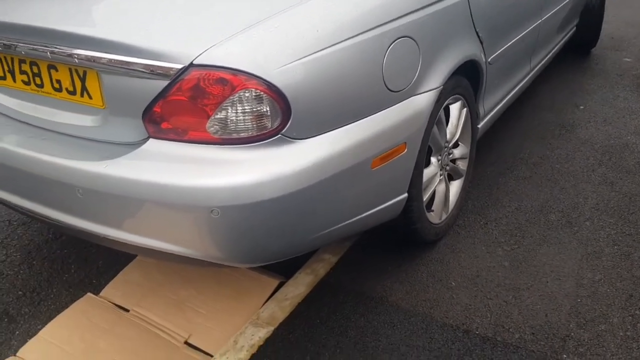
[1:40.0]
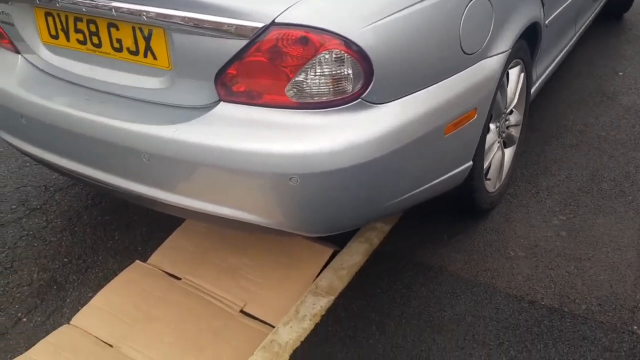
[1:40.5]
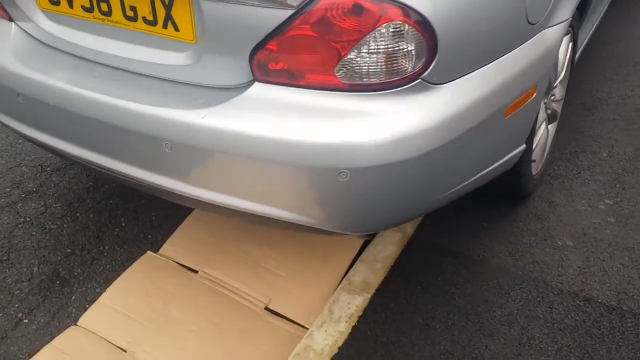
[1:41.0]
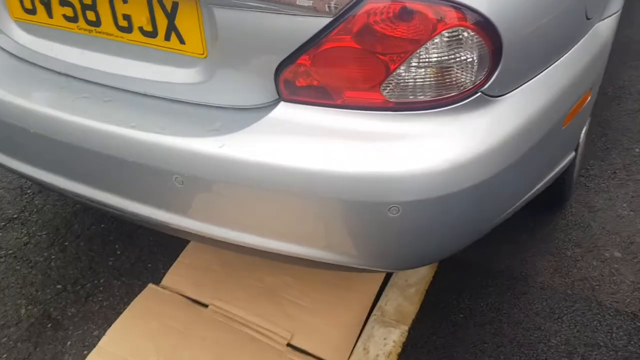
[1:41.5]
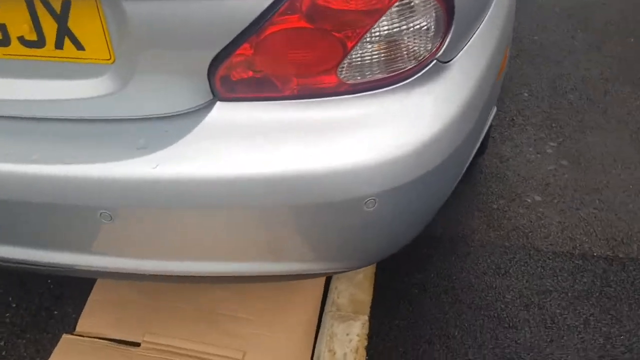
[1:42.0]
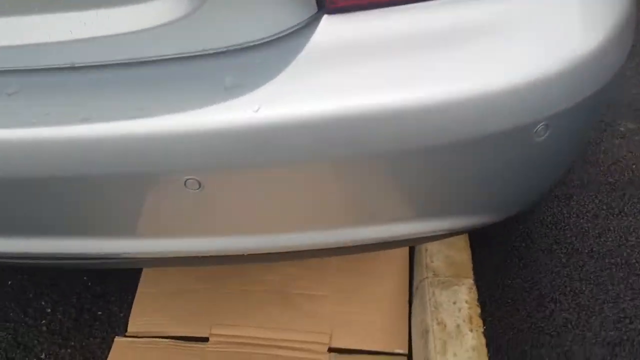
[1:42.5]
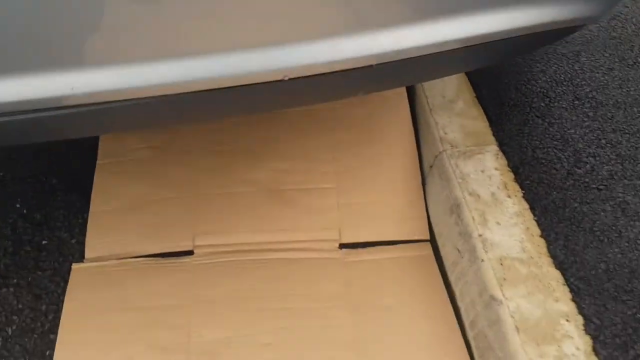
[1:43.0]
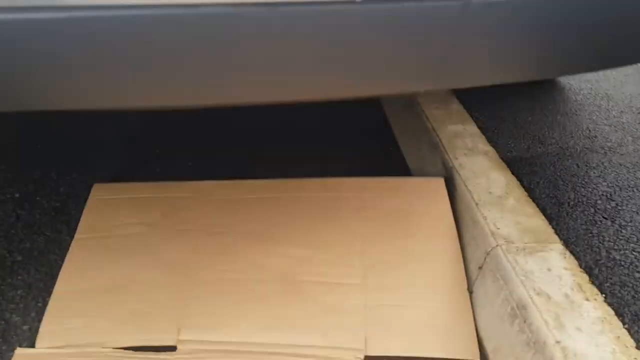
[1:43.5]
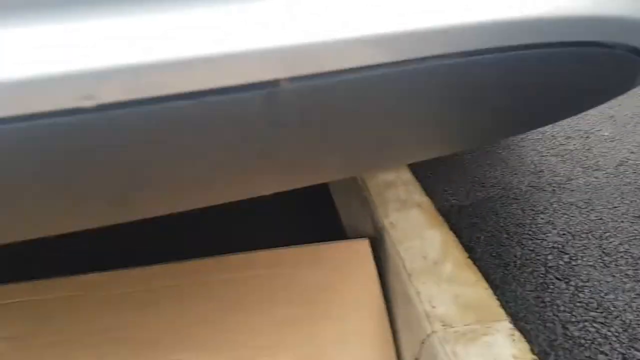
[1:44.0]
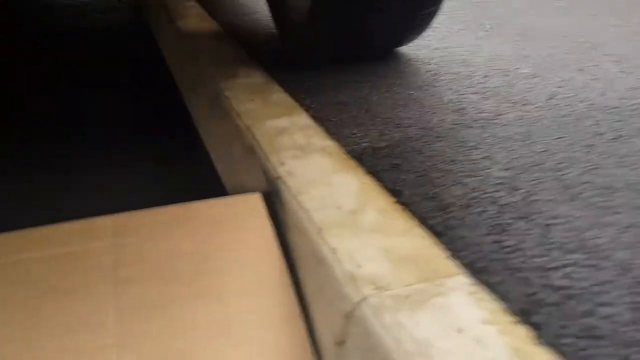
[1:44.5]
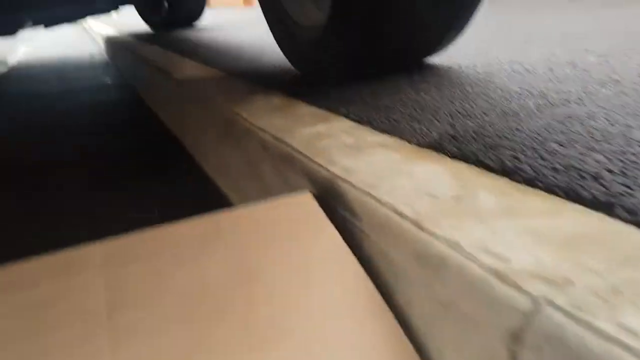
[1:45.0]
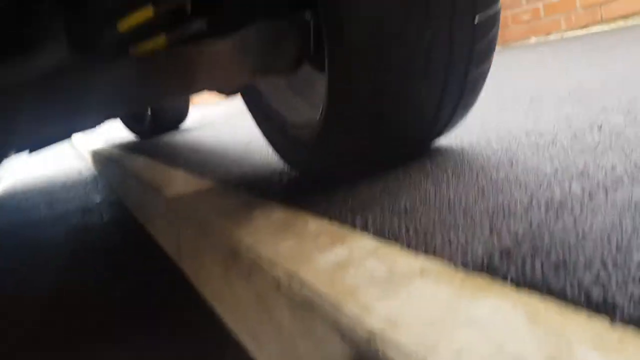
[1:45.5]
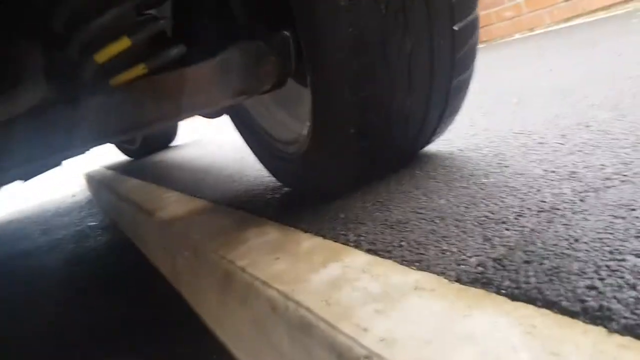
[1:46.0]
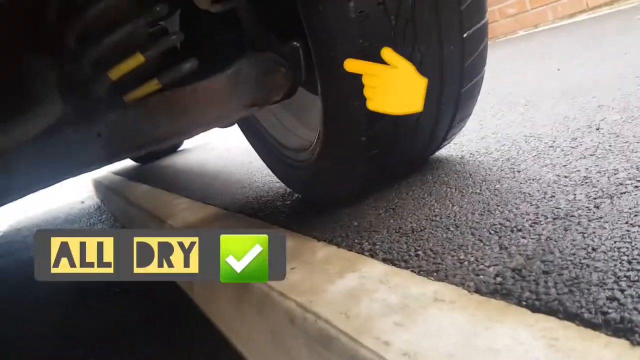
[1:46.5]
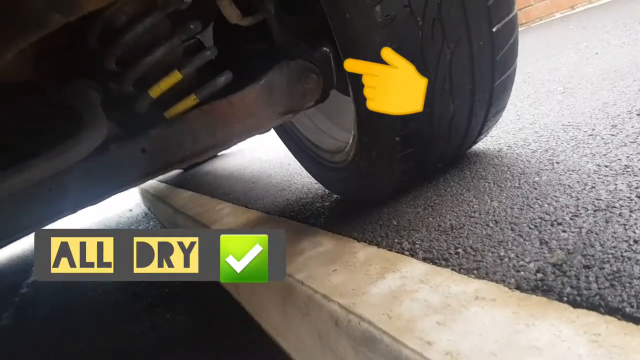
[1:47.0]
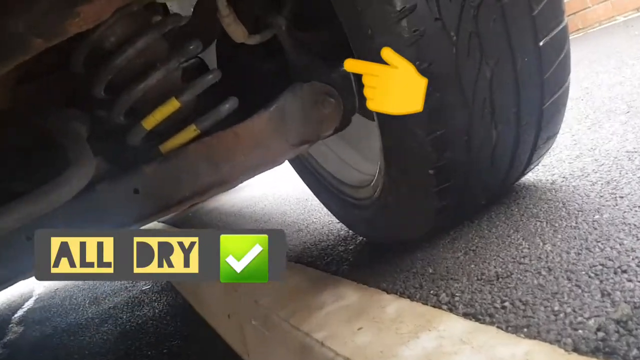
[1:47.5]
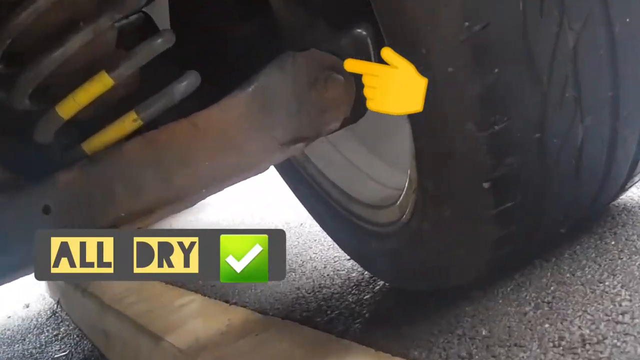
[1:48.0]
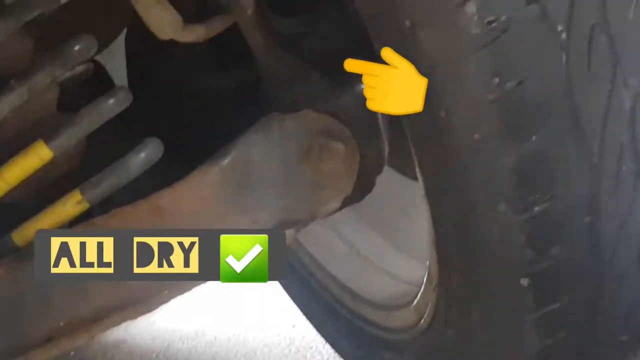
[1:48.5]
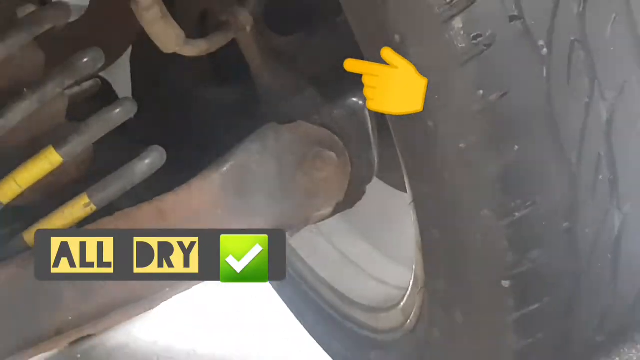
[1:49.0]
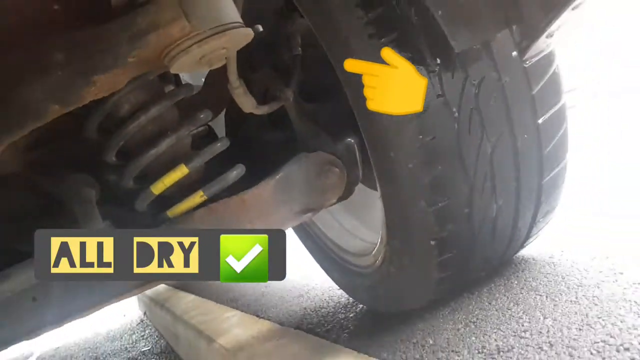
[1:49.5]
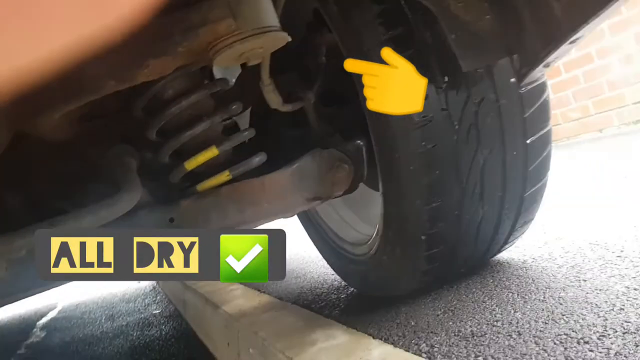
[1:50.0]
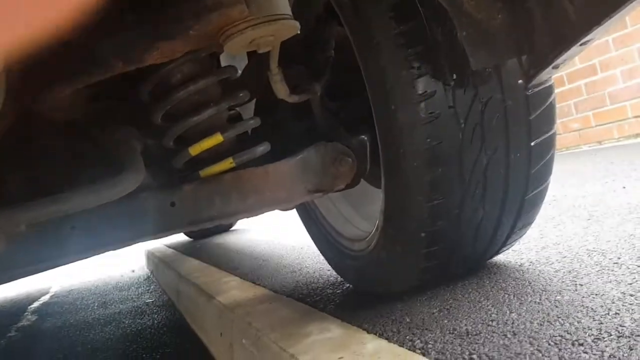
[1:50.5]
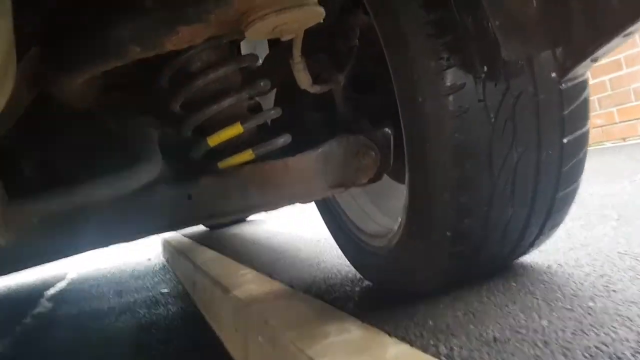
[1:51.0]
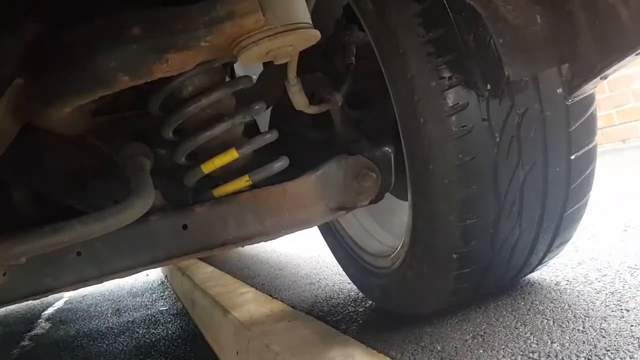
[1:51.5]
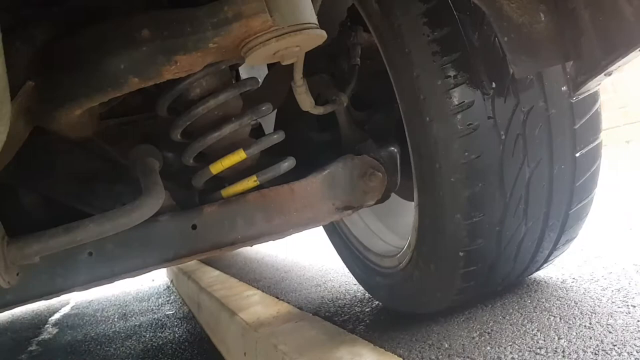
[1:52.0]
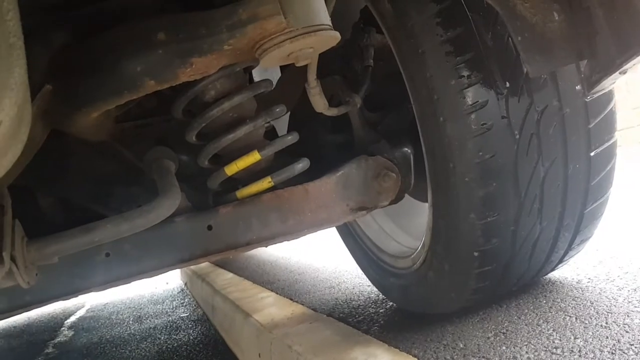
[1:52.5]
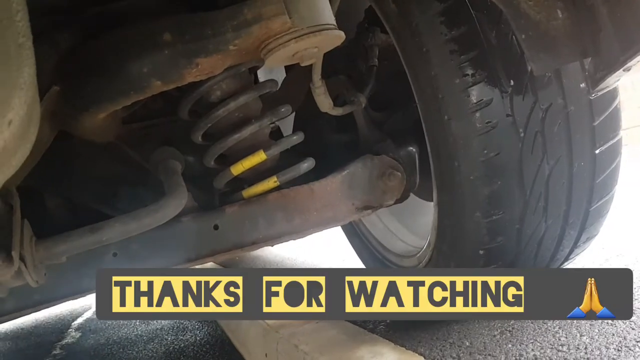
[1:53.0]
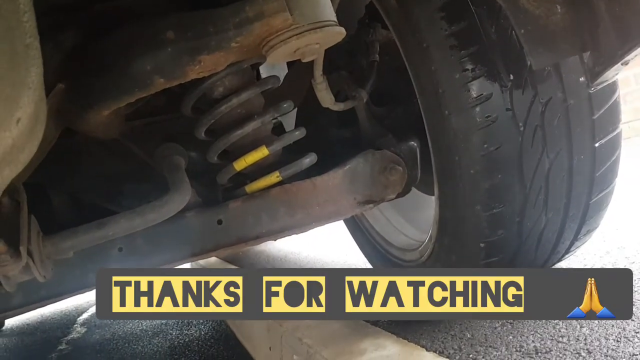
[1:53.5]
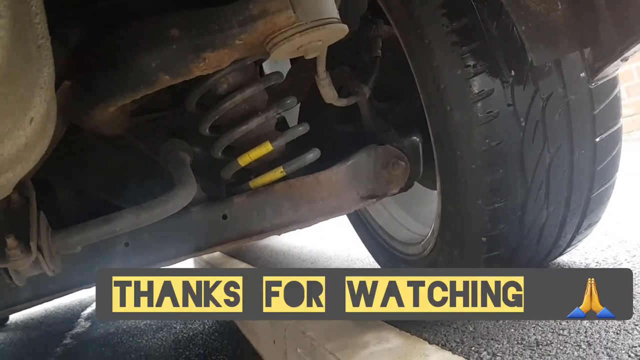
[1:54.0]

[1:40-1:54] A gray car is on the pavement with a cardboard box underneath it; the car has a yellow license plate. The camera zooms in underneath the car, where there is a box and a board like a two-by-four on the passenger, or right, side of the car. A box appears that says "all dry", and a yellow animated hand points at the axle of the tire. The person's hand comes up on the upper left of the screen, and the camera stands still while the words "thanks for watching" appear at the bottom right with a high-five emoji.